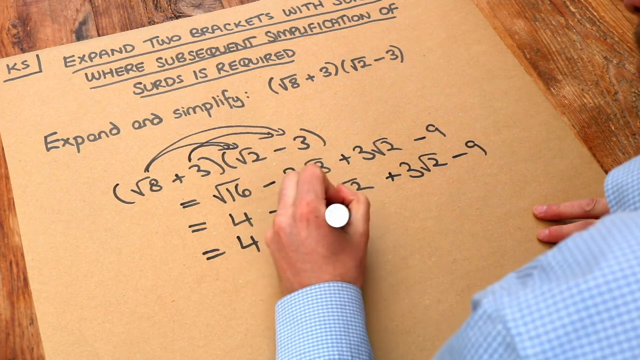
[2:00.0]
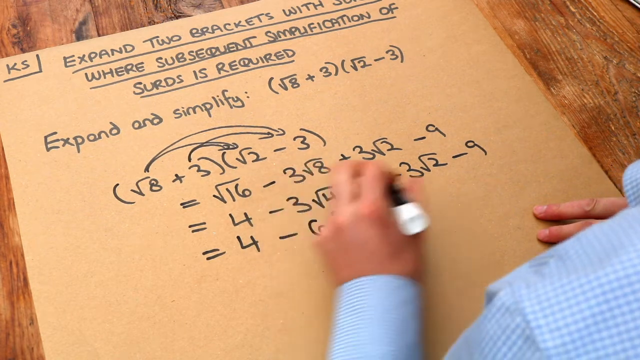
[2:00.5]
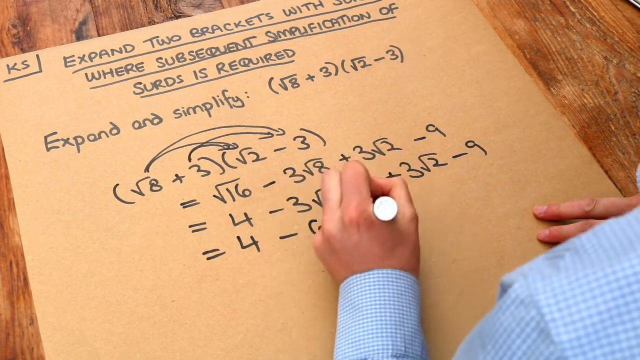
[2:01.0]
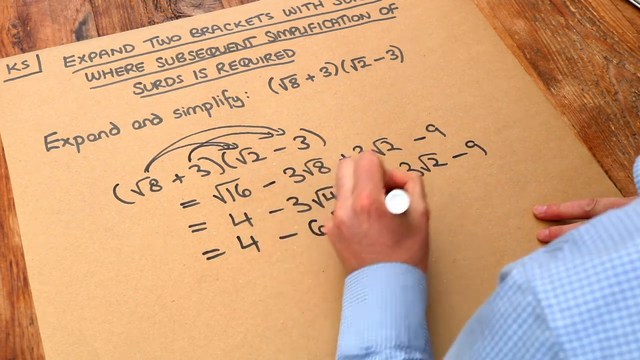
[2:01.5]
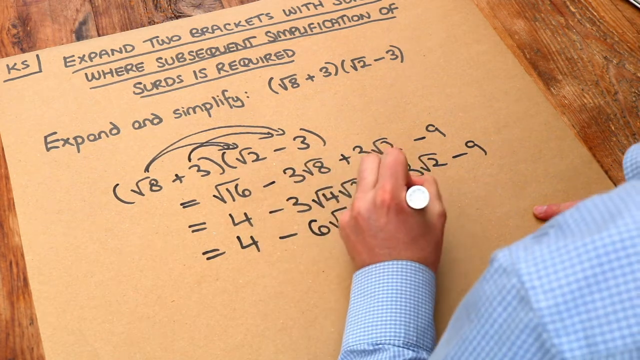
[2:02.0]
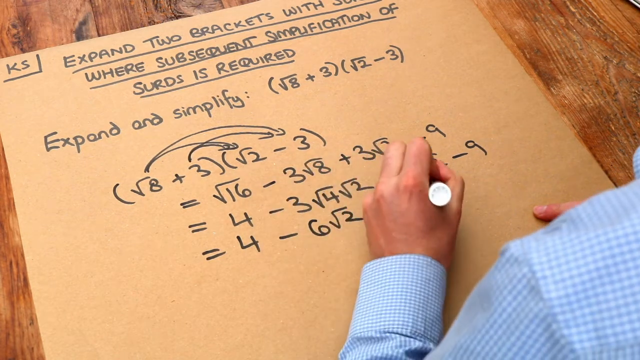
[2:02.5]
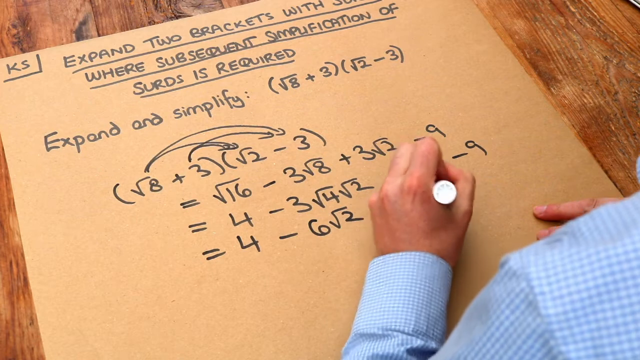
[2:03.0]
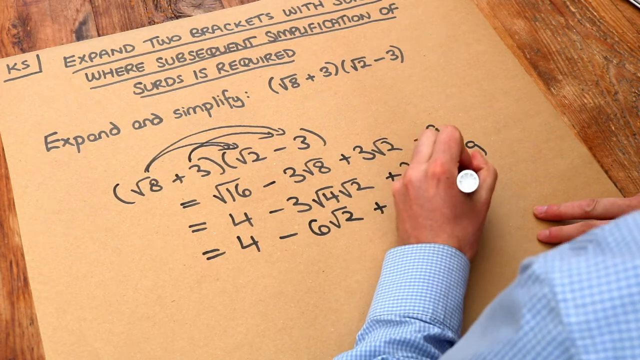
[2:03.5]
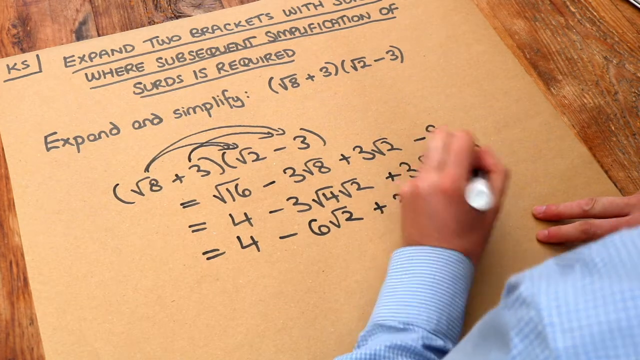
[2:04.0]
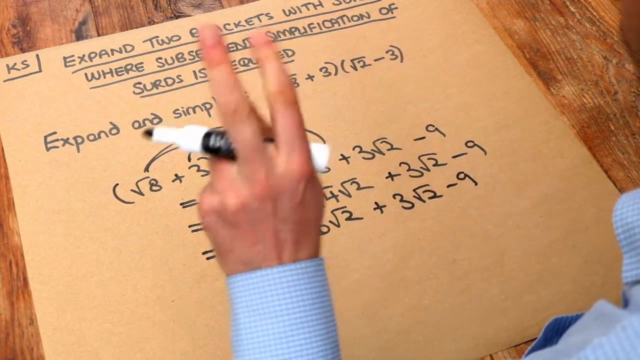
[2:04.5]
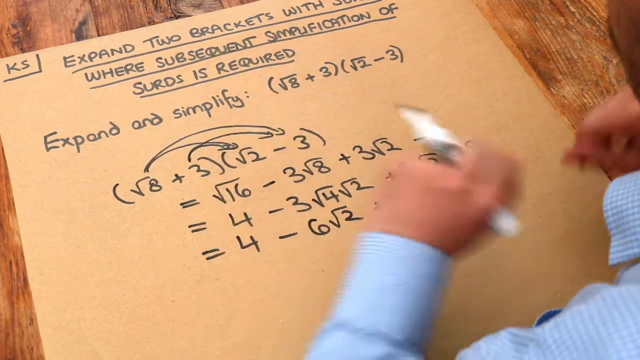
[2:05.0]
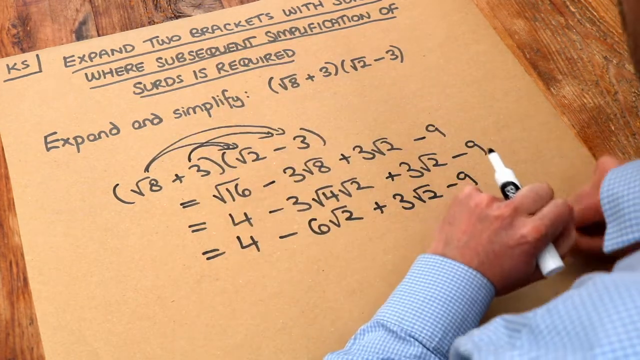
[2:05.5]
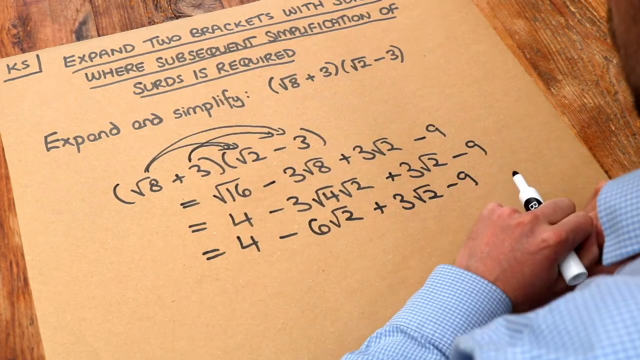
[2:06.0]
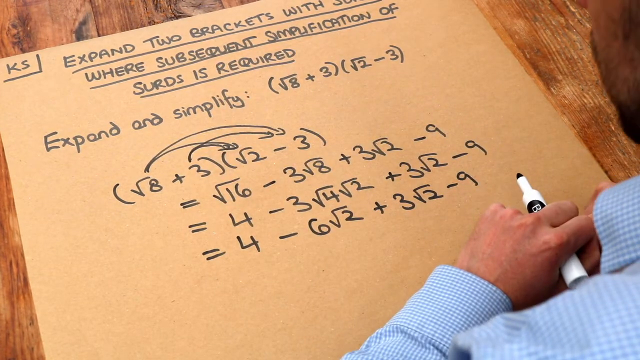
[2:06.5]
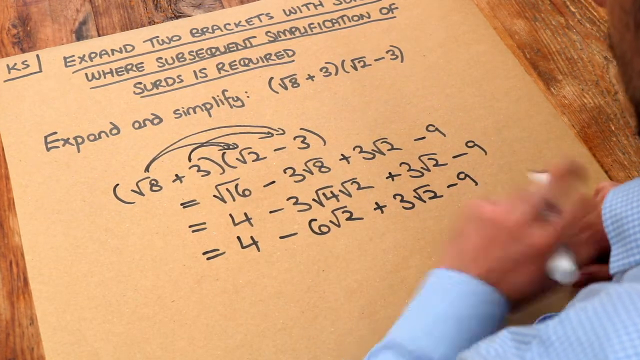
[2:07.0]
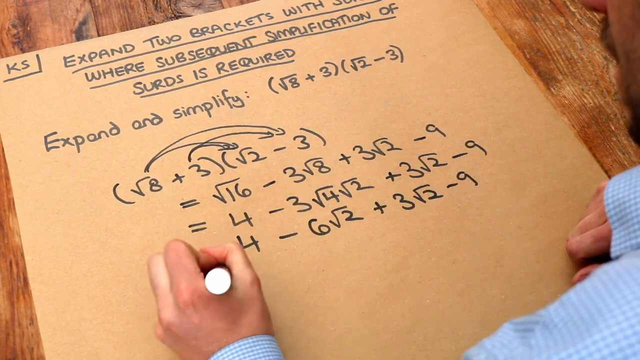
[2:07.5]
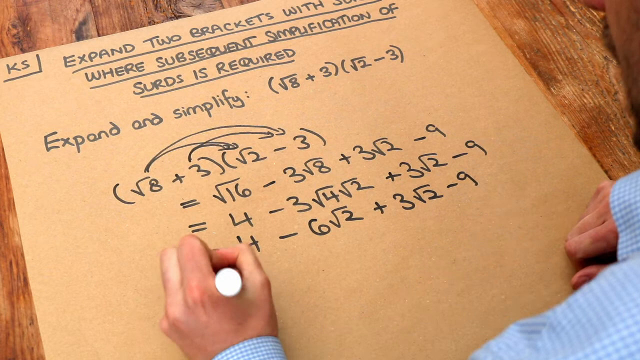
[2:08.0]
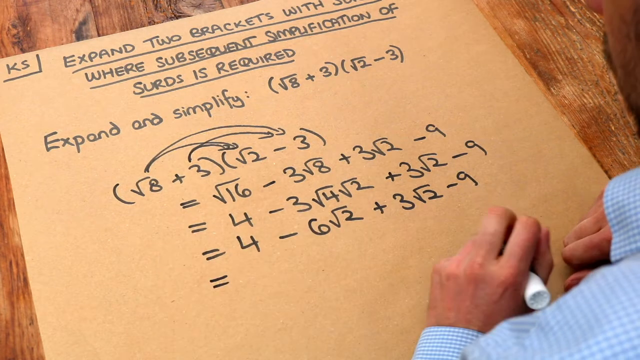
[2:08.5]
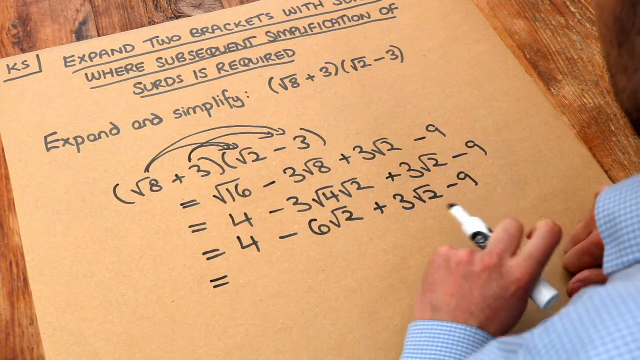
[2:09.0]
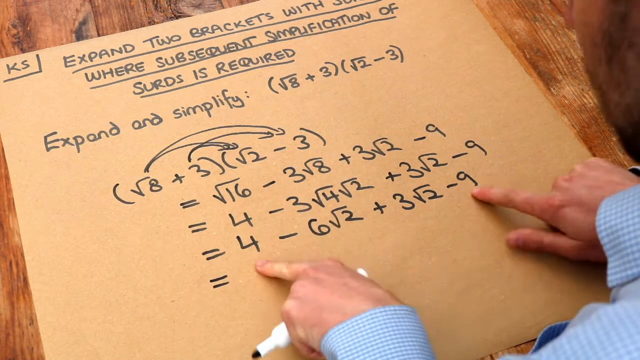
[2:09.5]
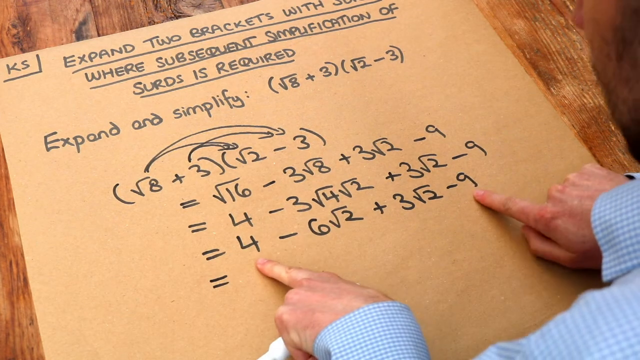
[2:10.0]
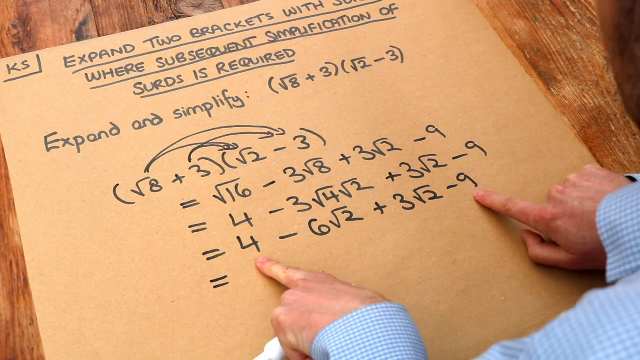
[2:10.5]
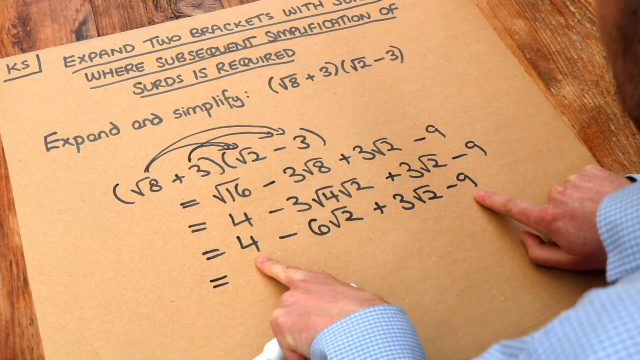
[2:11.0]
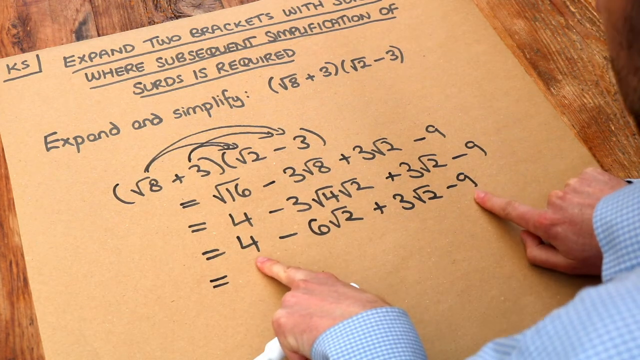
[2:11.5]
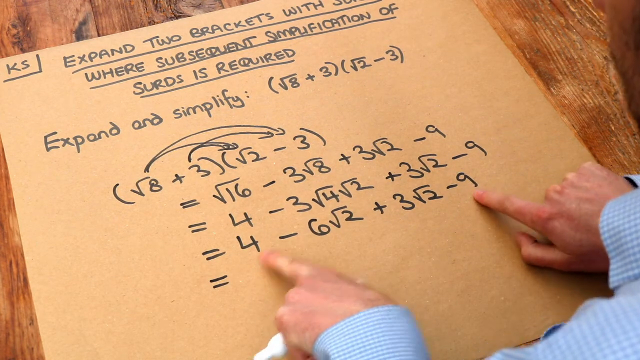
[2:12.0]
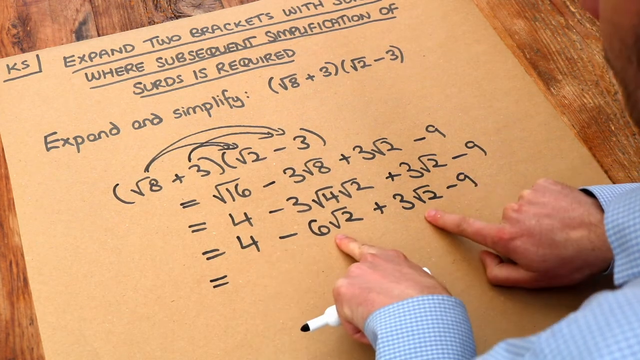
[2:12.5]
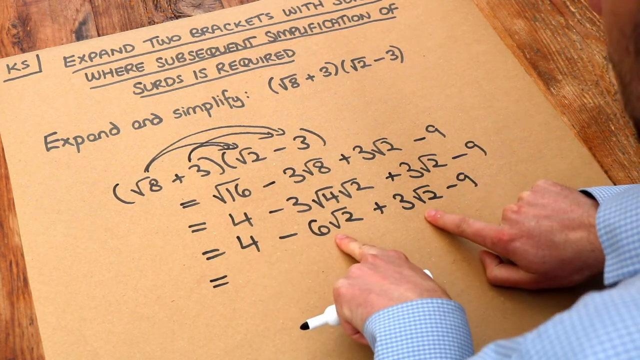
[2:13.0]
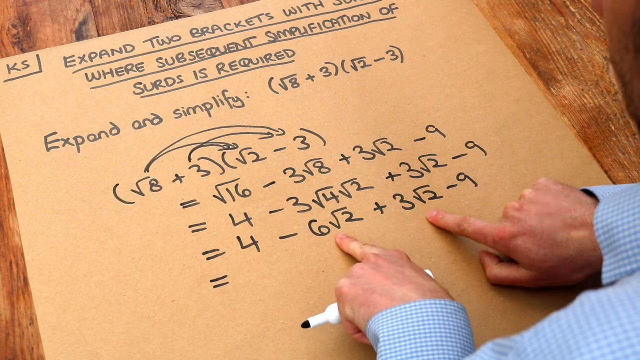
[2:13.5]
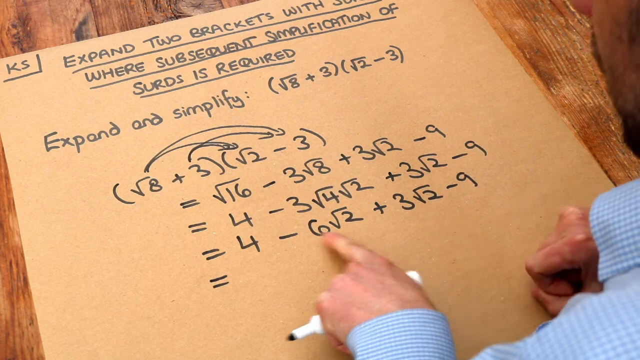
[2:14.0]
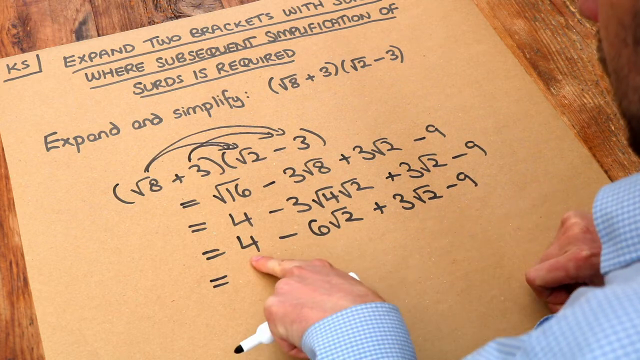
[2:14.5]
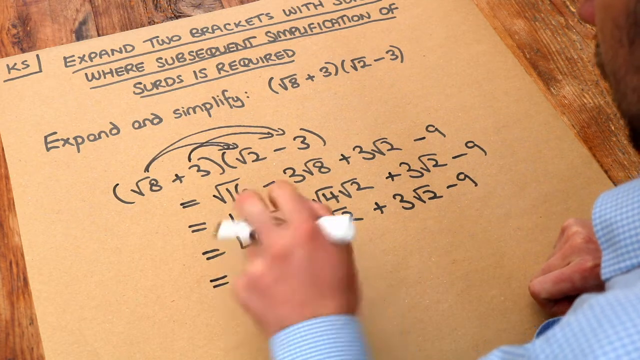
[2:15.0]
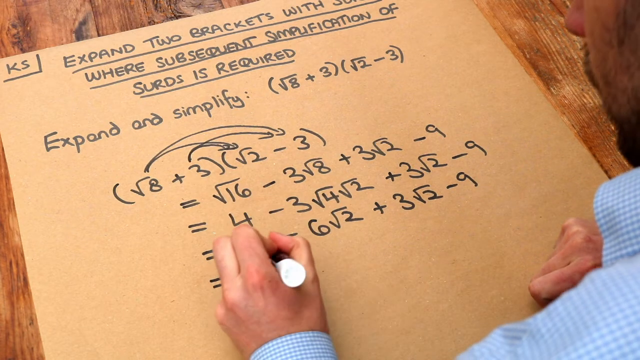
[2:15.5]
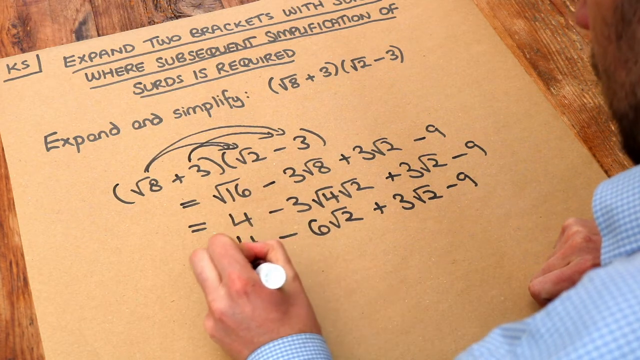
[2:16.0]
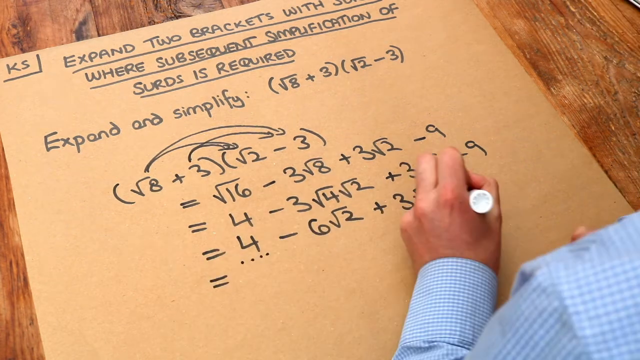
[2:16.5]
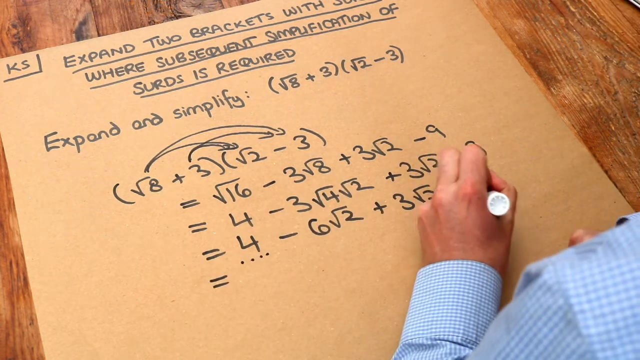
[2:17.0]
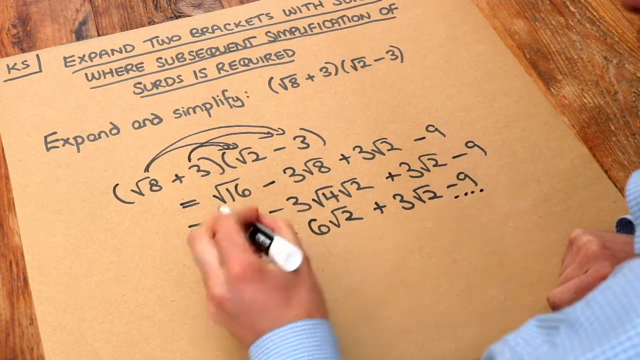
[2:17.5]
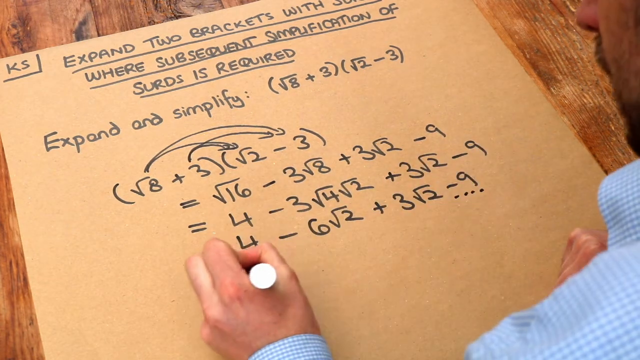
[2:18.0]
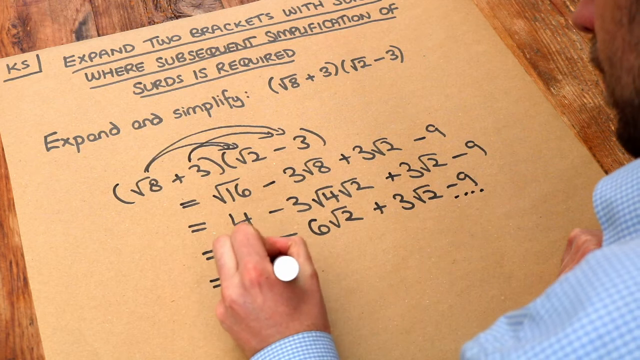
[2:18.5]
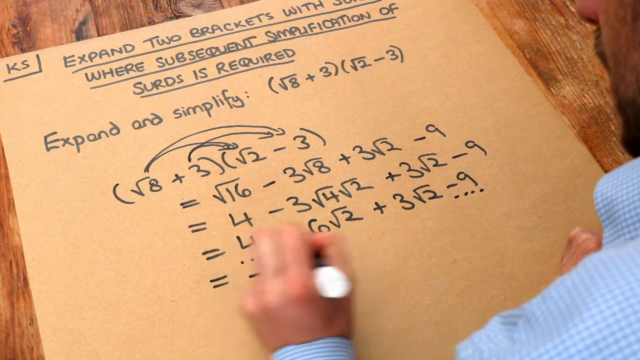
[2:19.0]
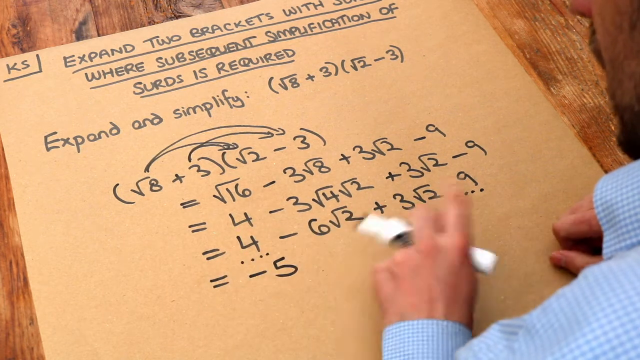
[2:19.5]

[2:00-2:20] He writes plus three square root of two minus nine. His right hand goes up and off the screen, and his left hand goes up toward the middle with two fingers pointing up and the others curled under; he kind of makes air quotes and brings his hands back down in front of him. In the hand holding the marker, the tip sticks out between the pointer finger and thumb; the backs of the first parts of the pointer and middle fingers show, the ring finger and pinky are curled under, and the marker shows a little black with a white bead, then white going to the black tip. His jaw still moves a little. His left hand writes another equal sign underneath, then he moves his hand back in front of him on the right side. With both pointer fingers he points at the four and nine on the last line he wrote, then at the six square root of two and the three square root of two. His right hand moves back down, his left hand points at the four, and he writes negative five, putting five dots under the four and five dots under the nine.